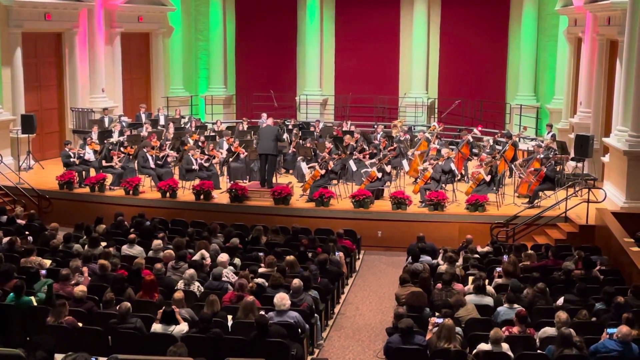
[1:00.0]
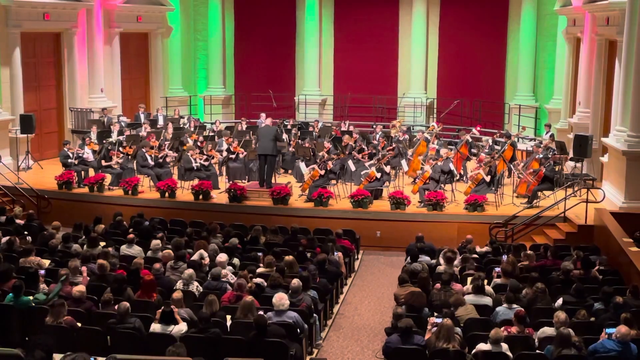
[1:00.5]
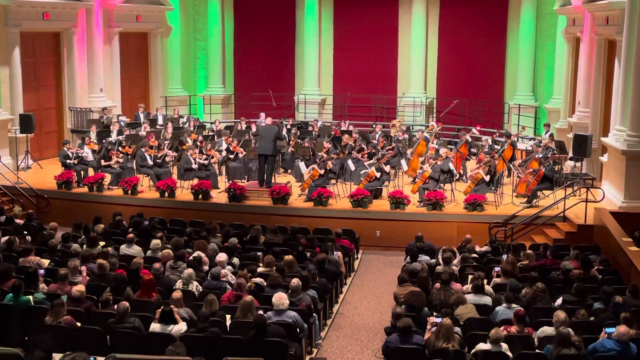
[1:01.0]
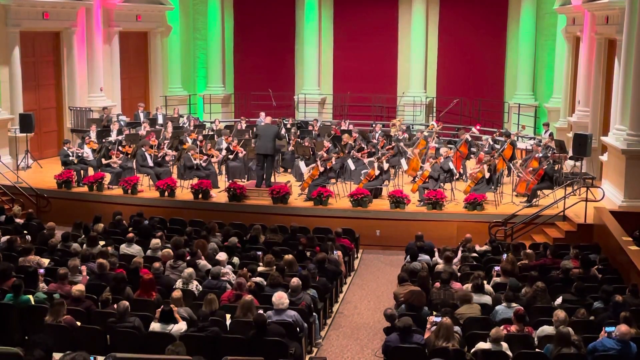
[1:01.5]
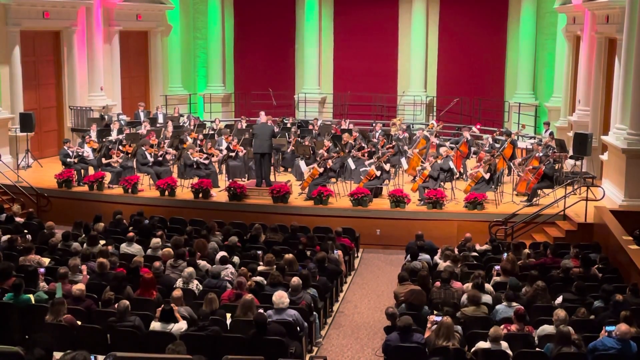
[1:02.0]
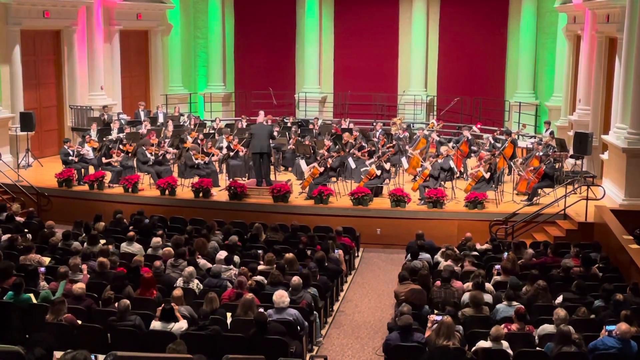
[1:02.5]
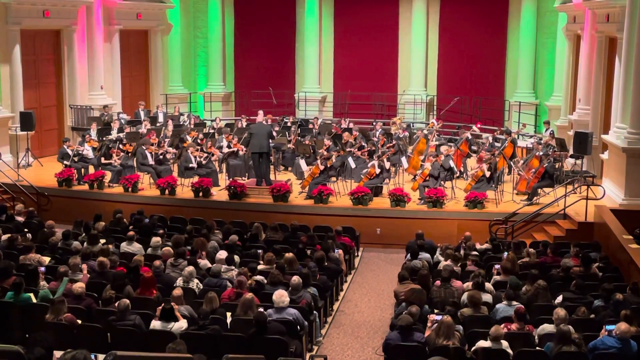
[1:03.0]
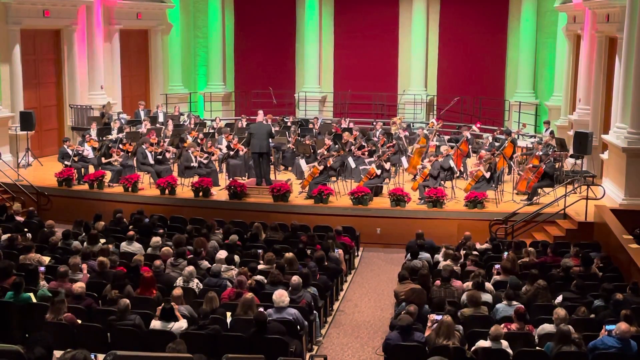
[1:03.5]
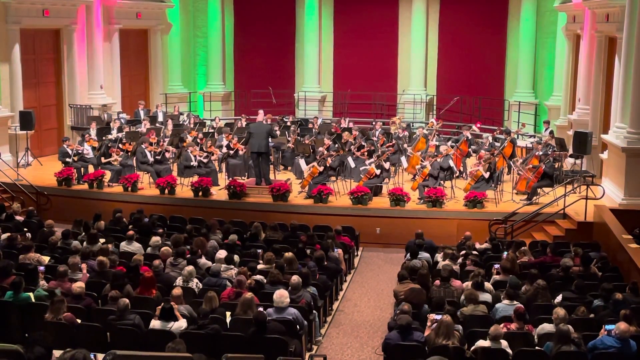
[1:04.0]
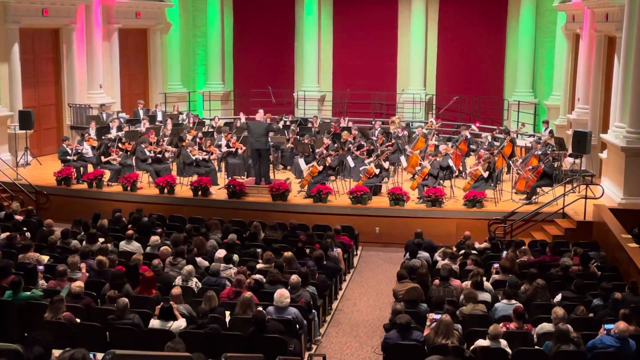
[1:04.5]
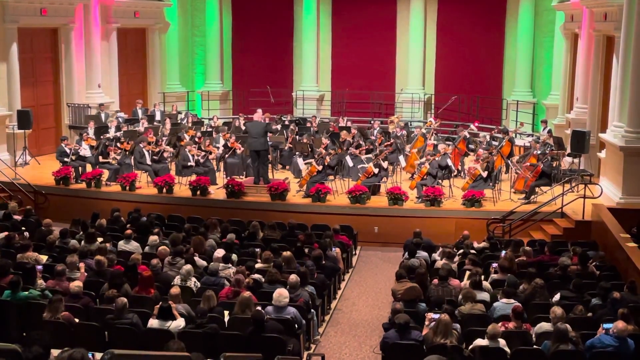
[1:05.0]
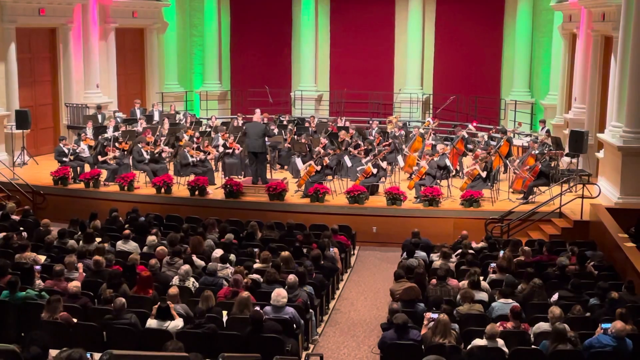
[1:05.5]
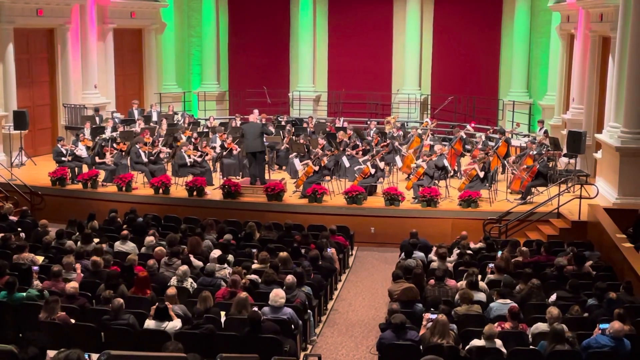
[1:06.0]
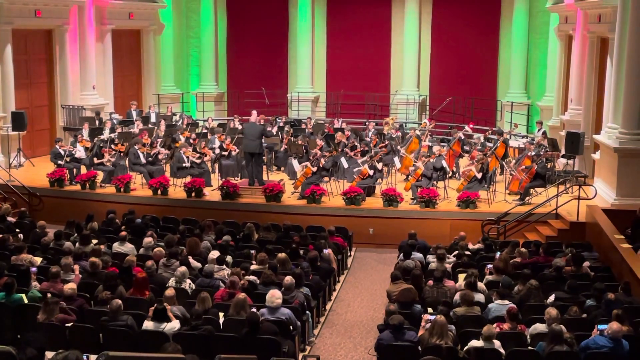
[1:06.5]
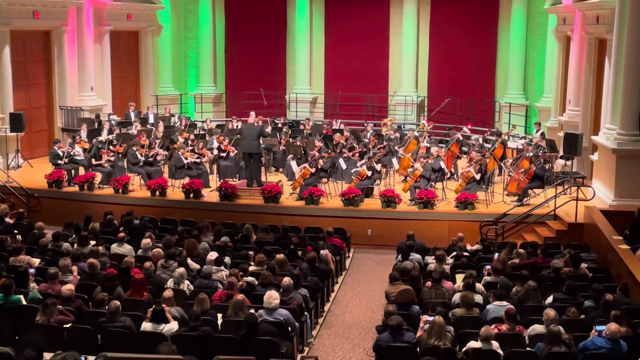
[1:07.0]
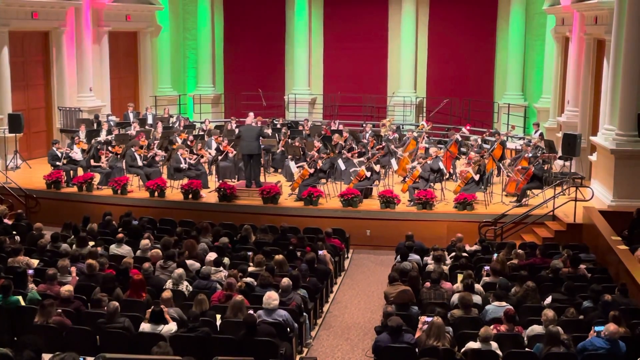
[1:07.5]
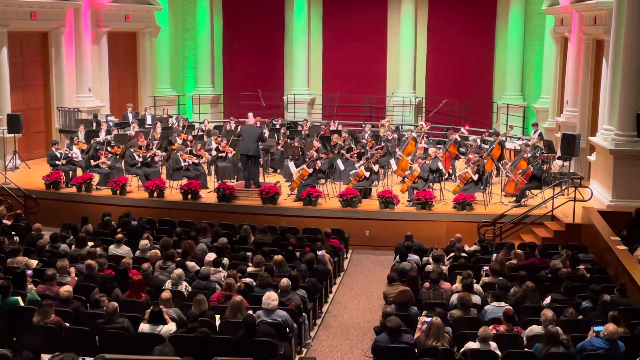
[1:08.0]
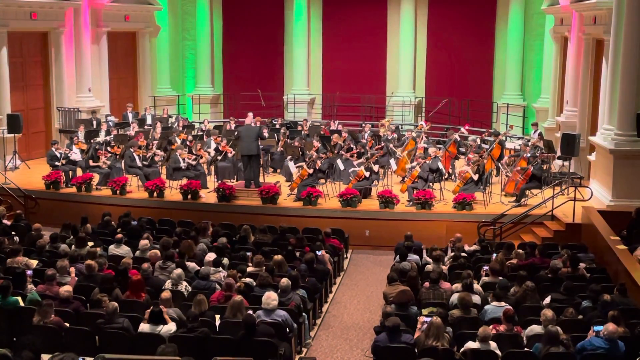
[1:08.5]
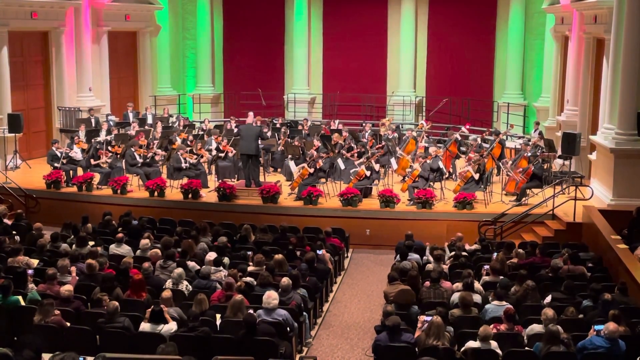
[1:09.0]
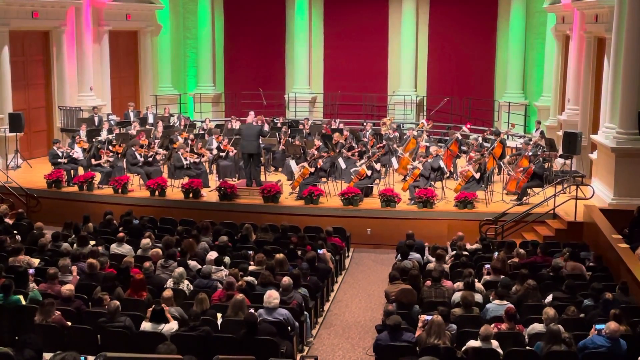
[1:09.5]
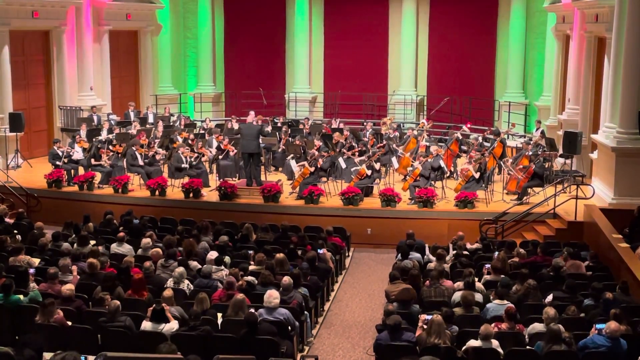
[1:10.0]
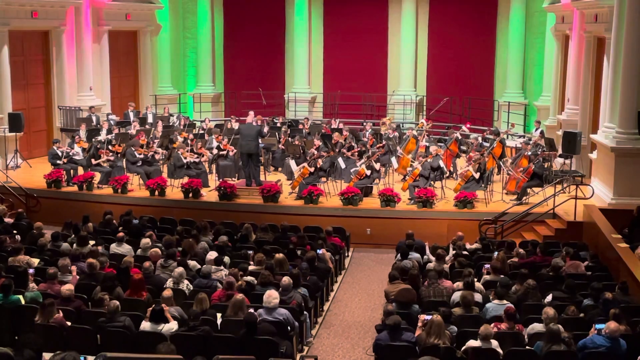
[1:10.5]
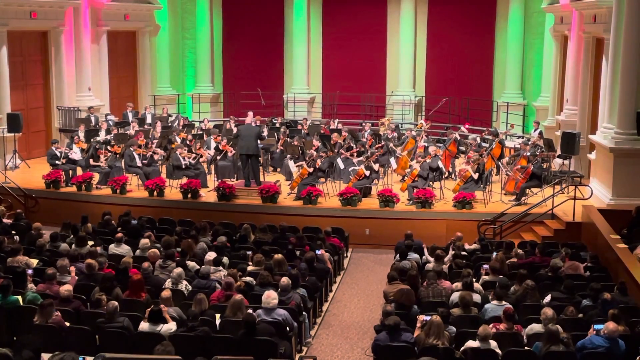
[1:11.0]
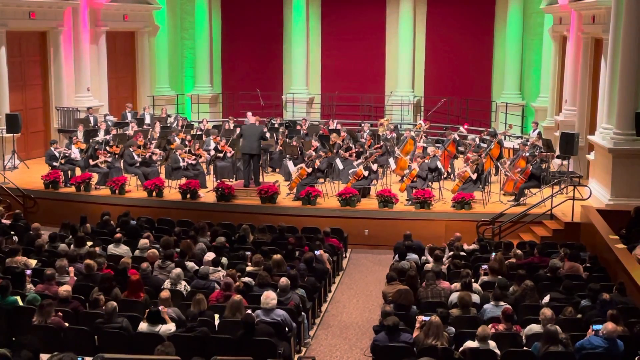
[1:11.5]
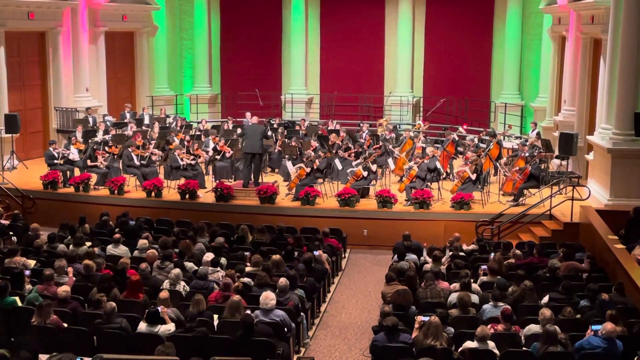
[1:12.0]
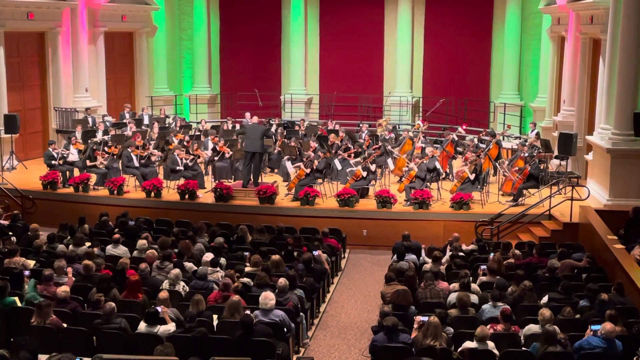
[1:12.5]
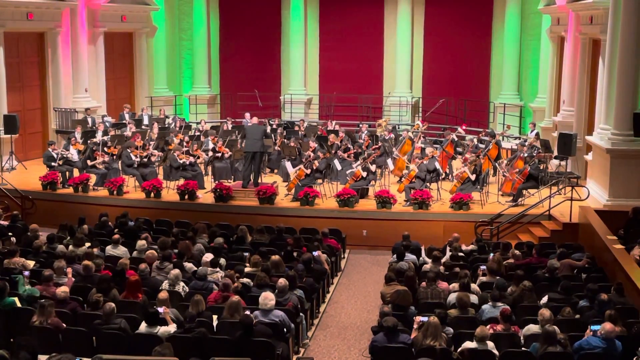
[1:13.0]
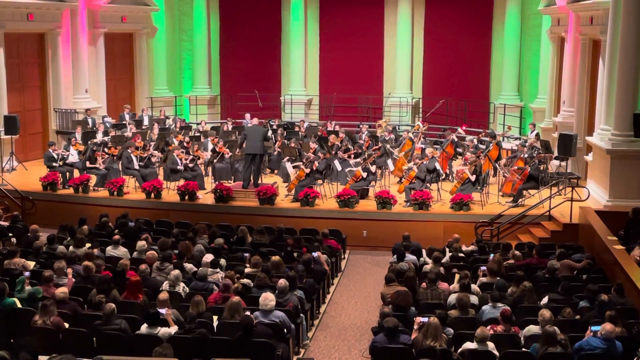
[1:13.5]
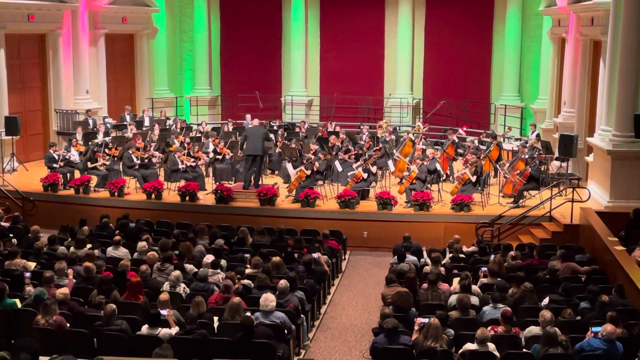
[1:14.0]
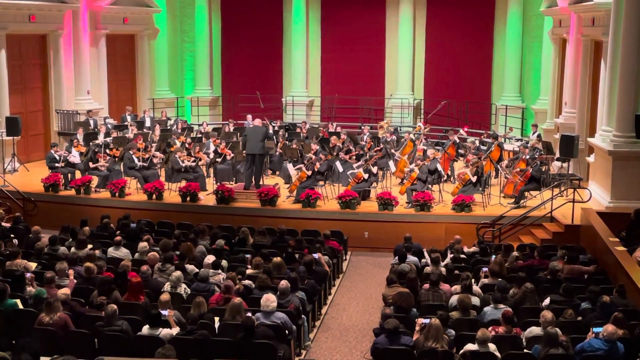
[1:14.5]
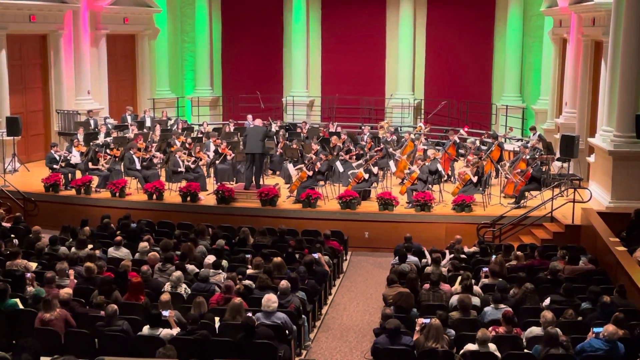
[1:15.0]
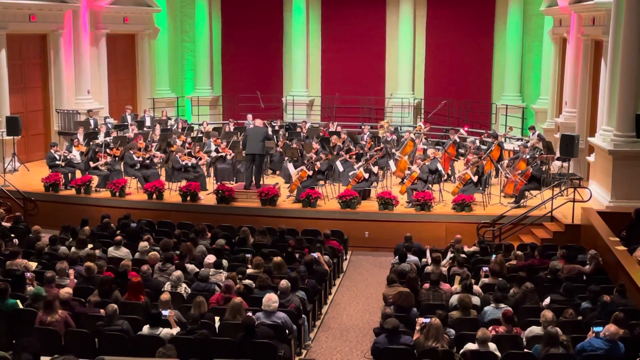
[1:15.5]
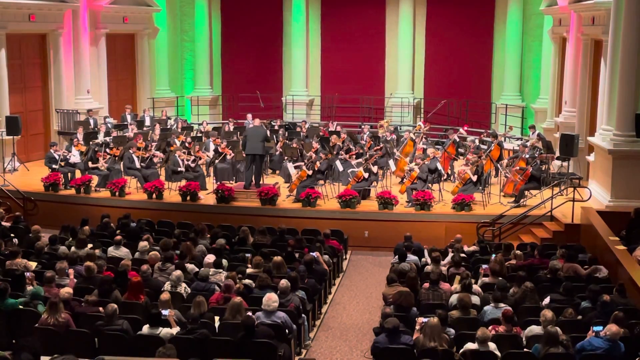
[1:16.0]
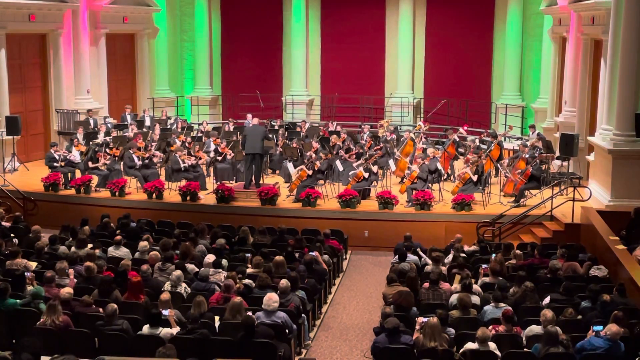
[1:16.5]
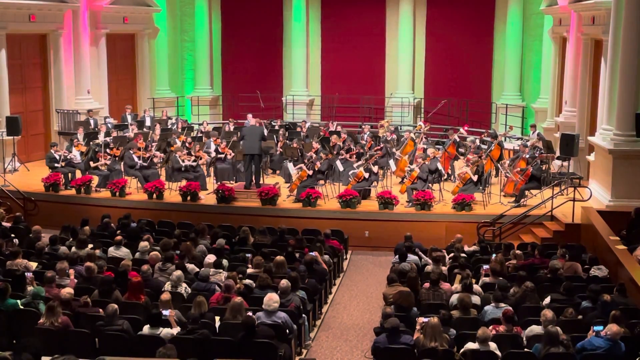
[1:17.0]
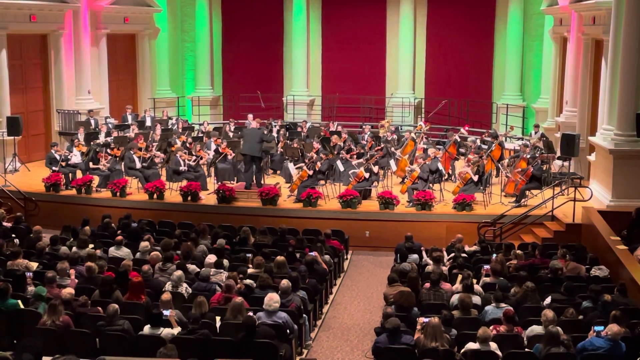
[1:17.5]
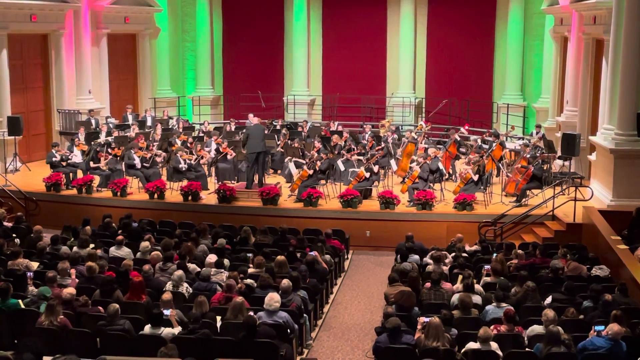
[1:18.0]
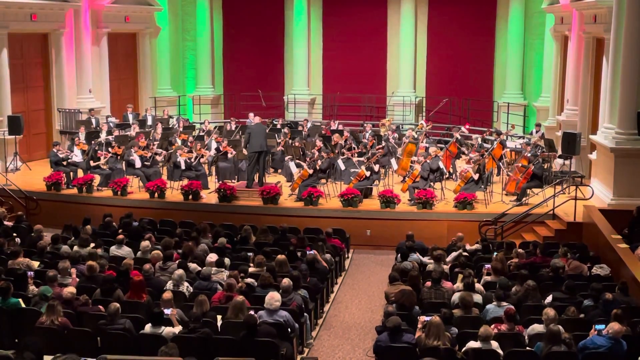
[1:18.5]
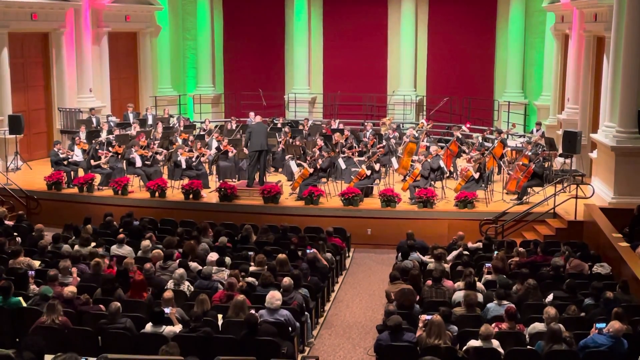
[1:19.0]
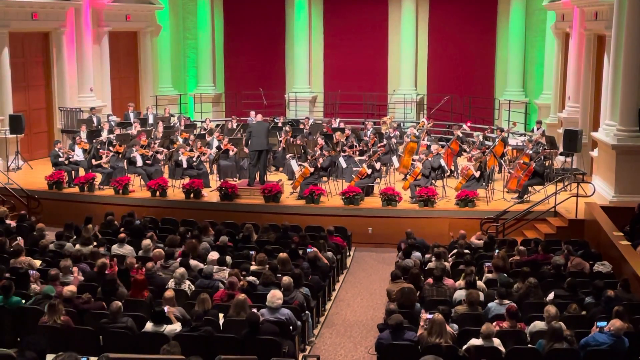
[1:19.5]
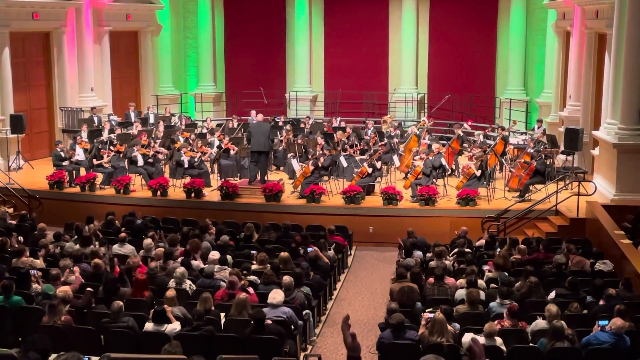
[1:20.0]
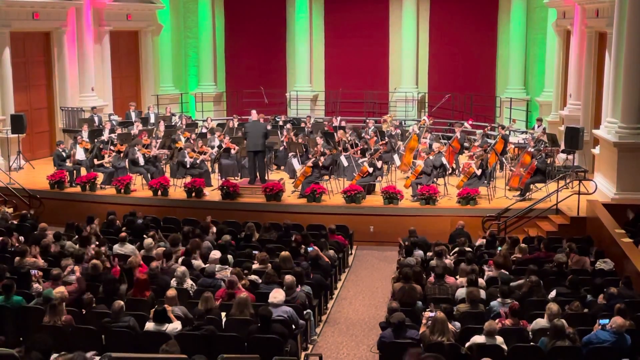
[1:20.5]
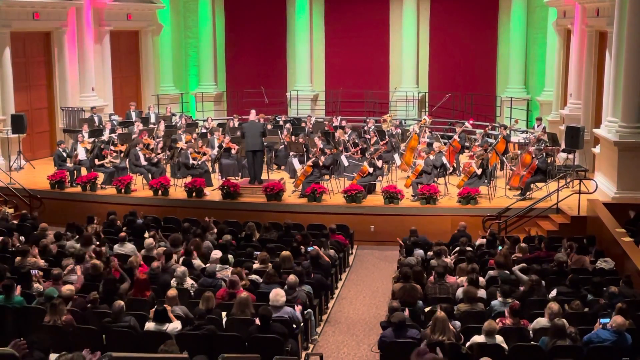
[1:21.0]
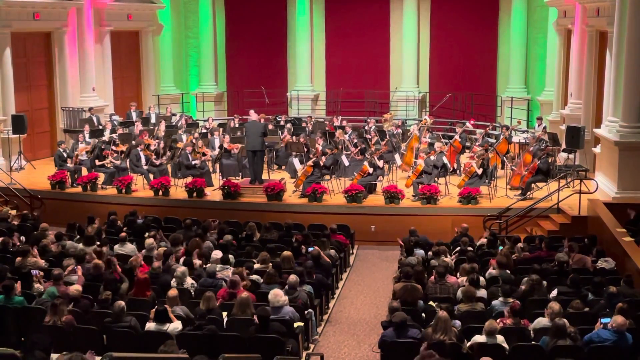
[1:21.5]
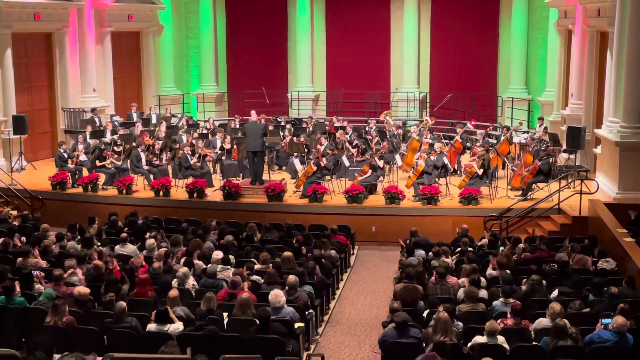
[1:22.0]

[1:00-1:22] The person on one side, a lady or a man, is still raising their arms up and moving them a lot, cheering the performance on. Everybody in the audience seems very entertained. The conductor moves his arms sharply as the players play, their arms moving. Red and green lights shine on some of the white pillars in the background of the stage, and there are two exit doors on each side of the stage. The red flowers remain along the edge of the stage all the way across. Towards the end, the audience claps for the performance, and the conductor moves his arms very sharply, especially at the very end, sweeping across to signal the end of the performance.